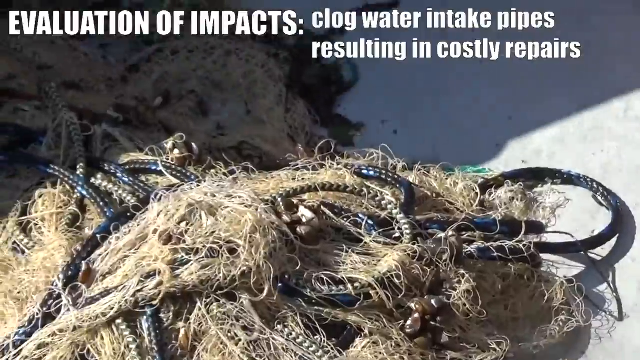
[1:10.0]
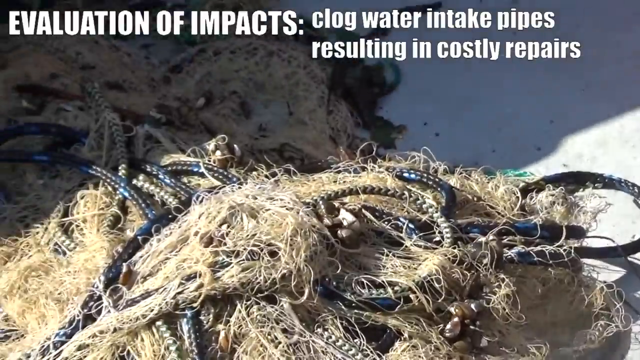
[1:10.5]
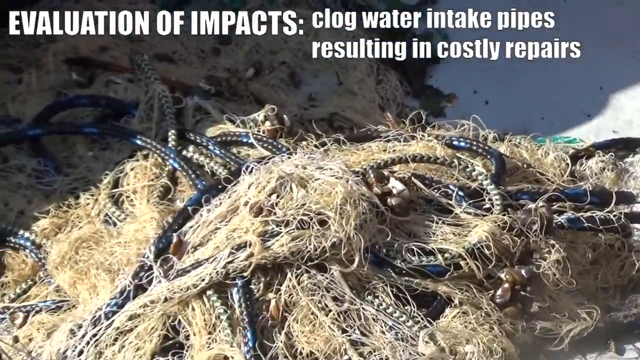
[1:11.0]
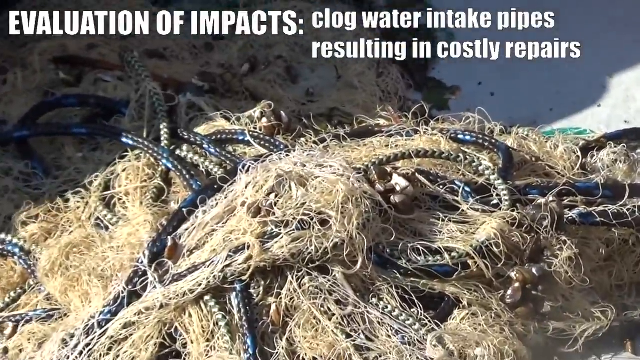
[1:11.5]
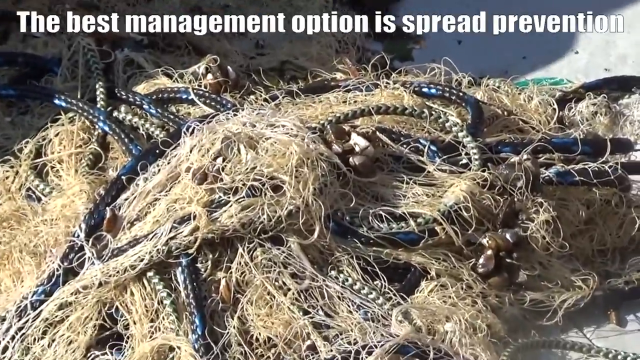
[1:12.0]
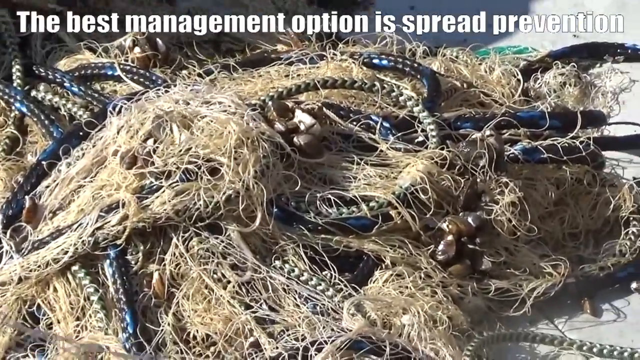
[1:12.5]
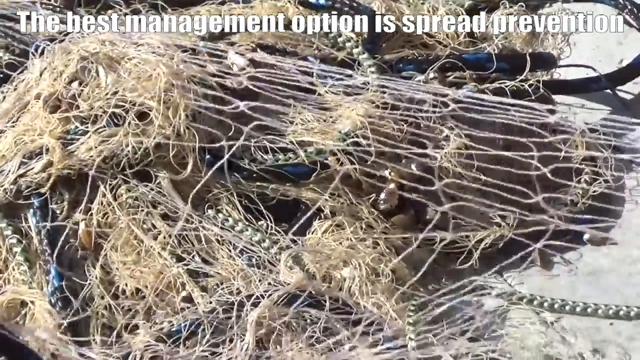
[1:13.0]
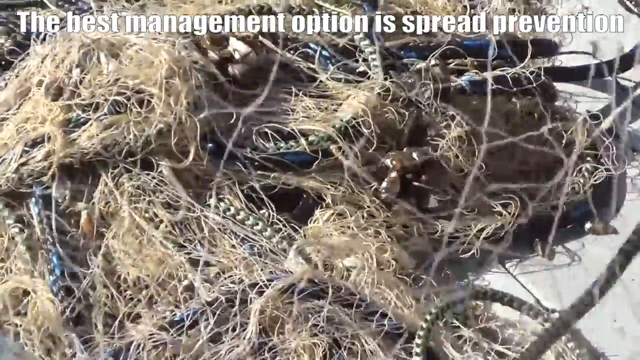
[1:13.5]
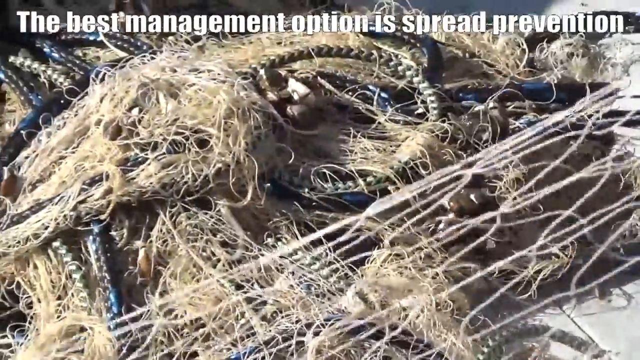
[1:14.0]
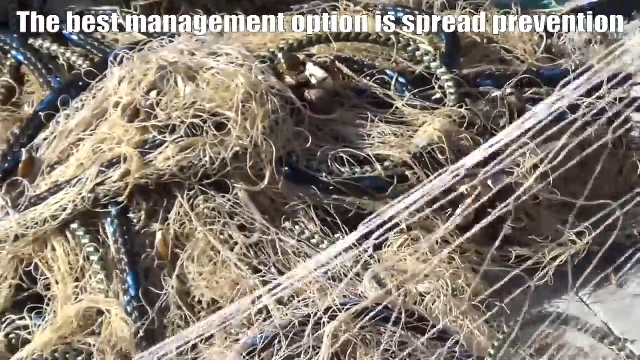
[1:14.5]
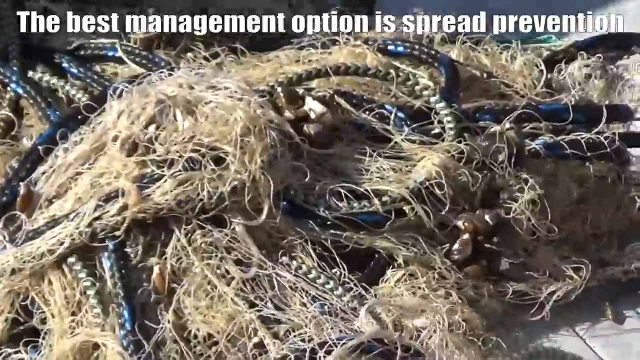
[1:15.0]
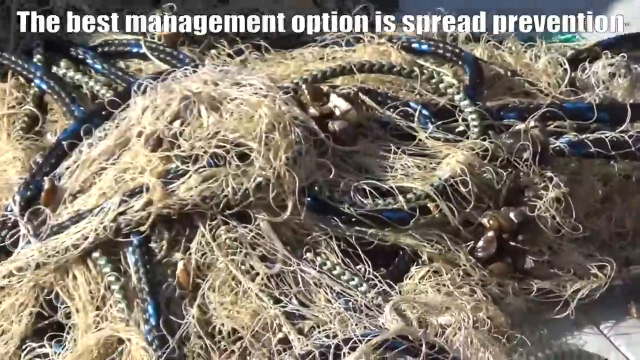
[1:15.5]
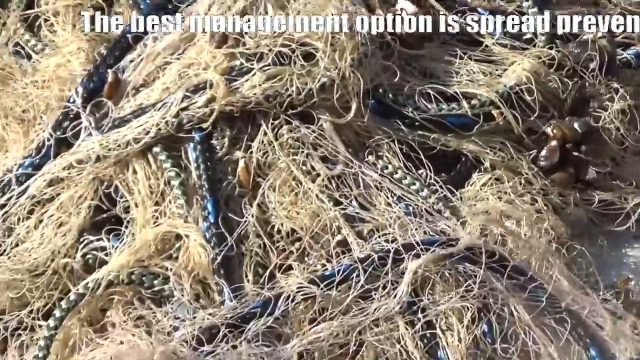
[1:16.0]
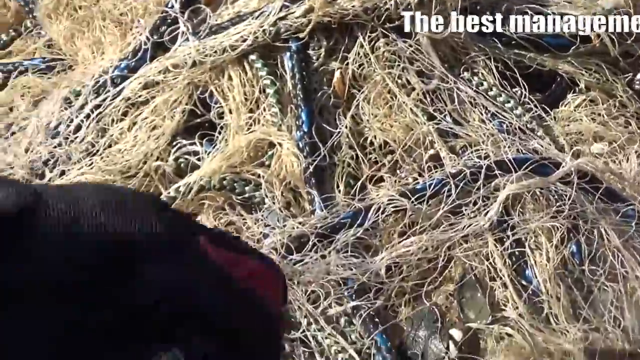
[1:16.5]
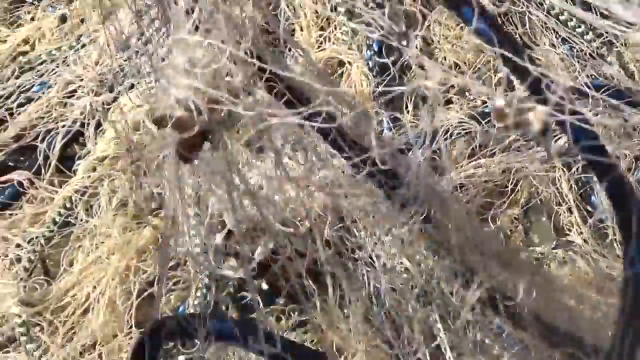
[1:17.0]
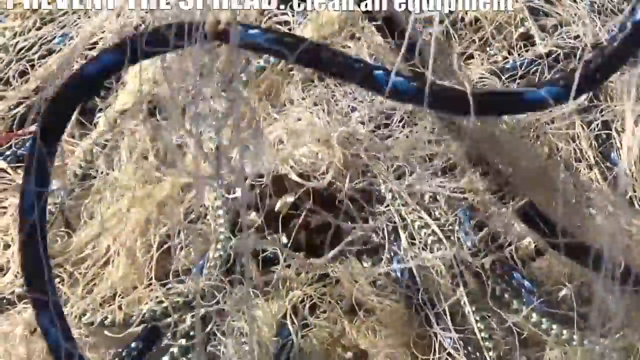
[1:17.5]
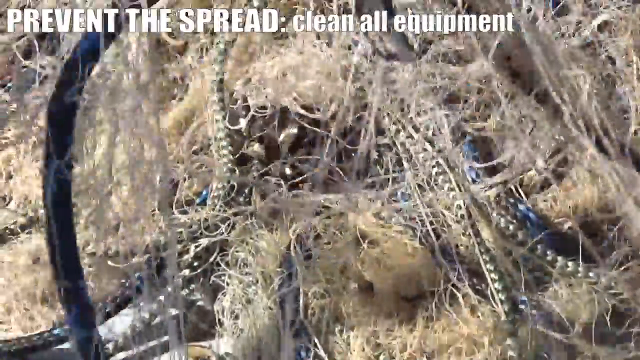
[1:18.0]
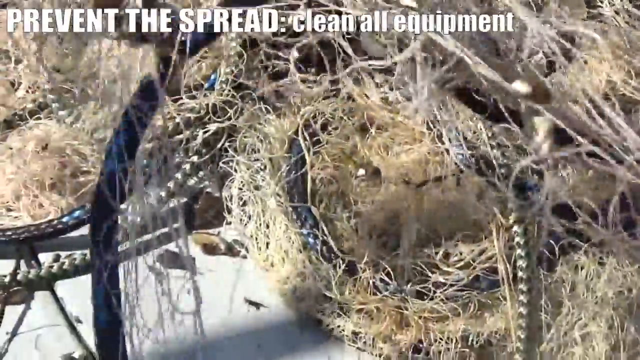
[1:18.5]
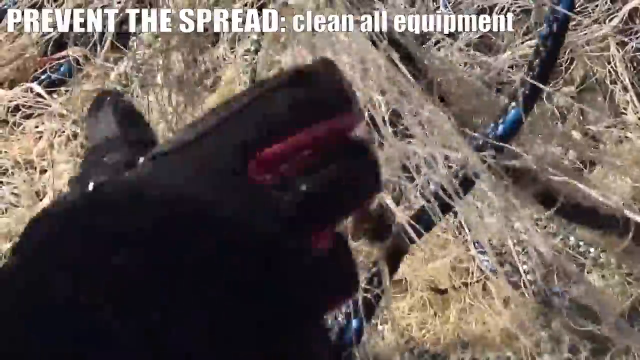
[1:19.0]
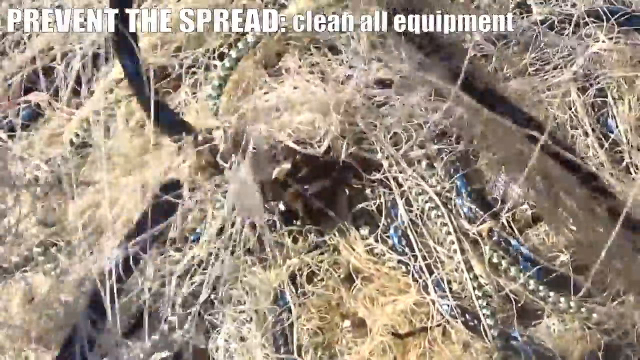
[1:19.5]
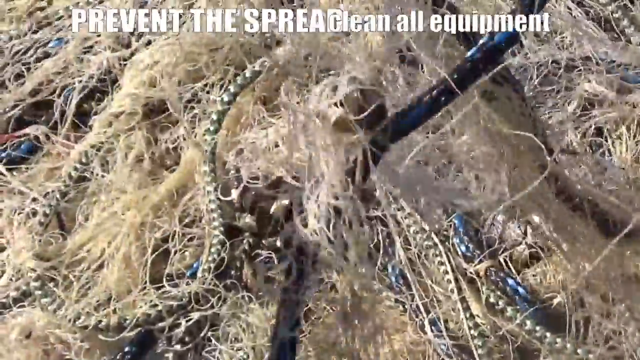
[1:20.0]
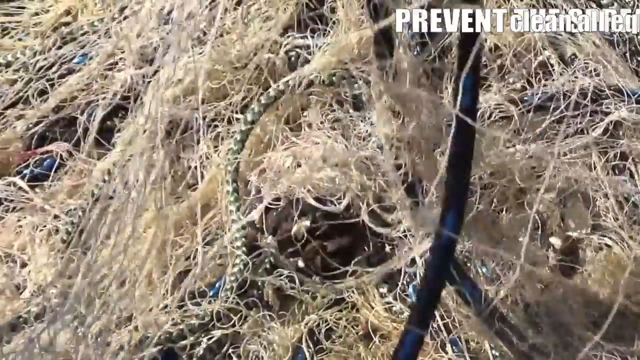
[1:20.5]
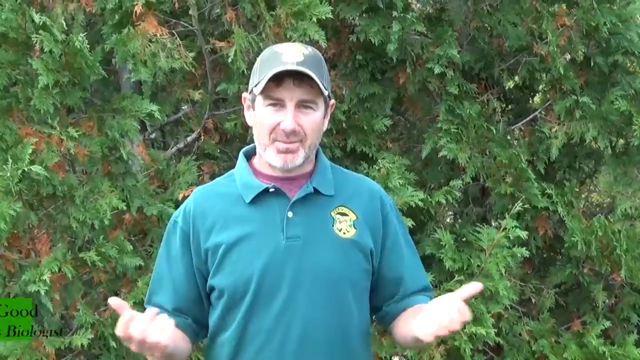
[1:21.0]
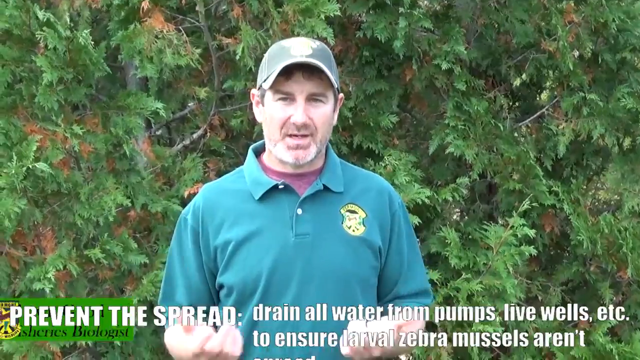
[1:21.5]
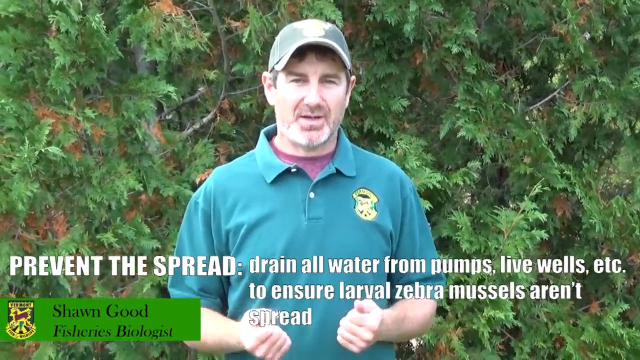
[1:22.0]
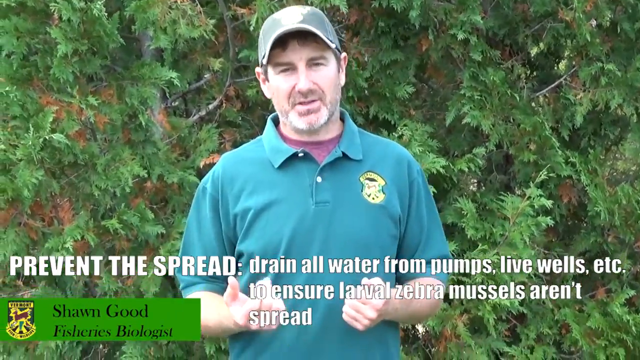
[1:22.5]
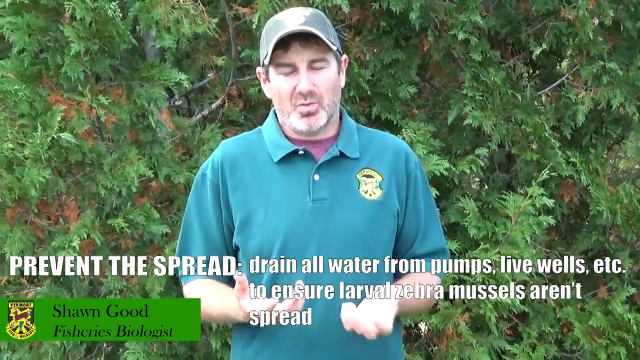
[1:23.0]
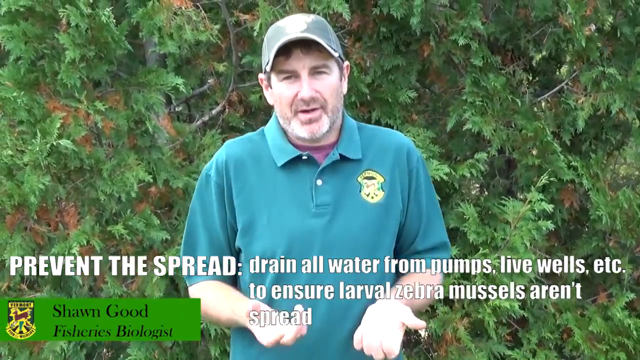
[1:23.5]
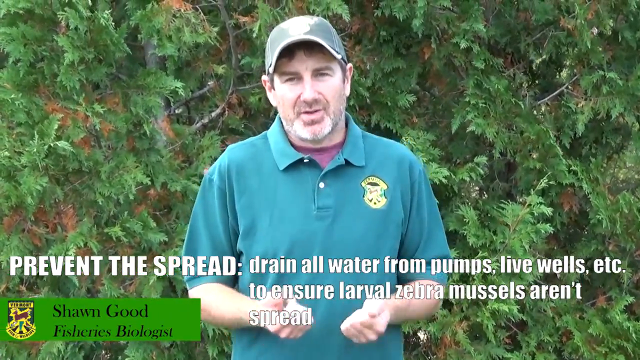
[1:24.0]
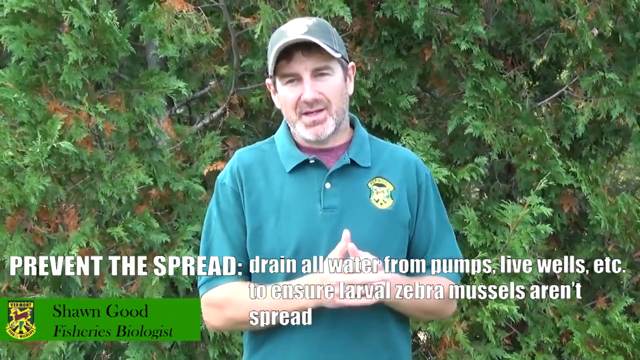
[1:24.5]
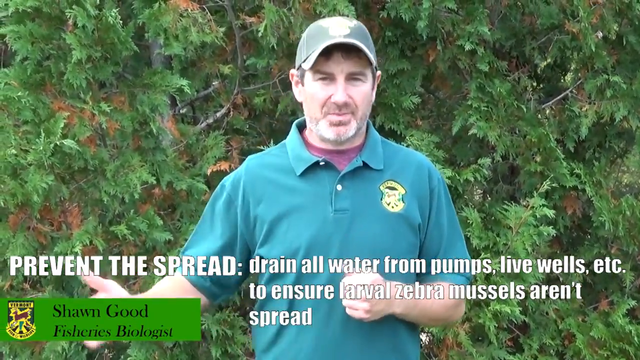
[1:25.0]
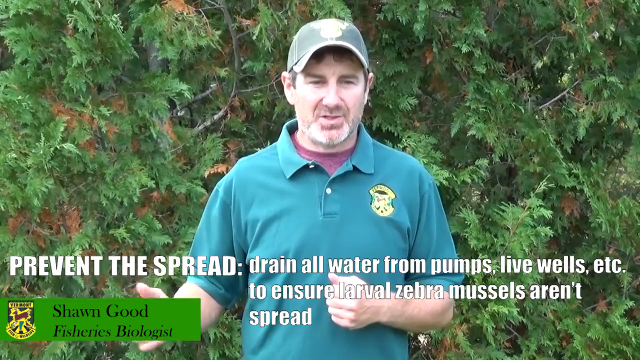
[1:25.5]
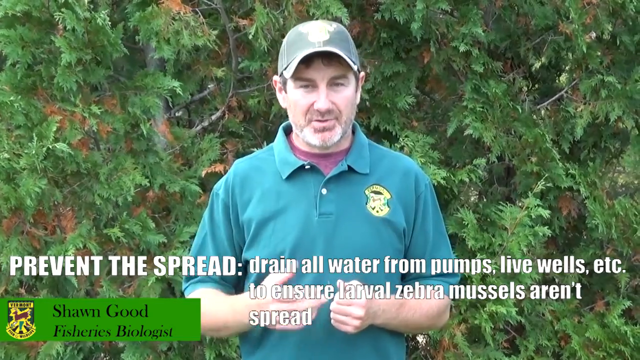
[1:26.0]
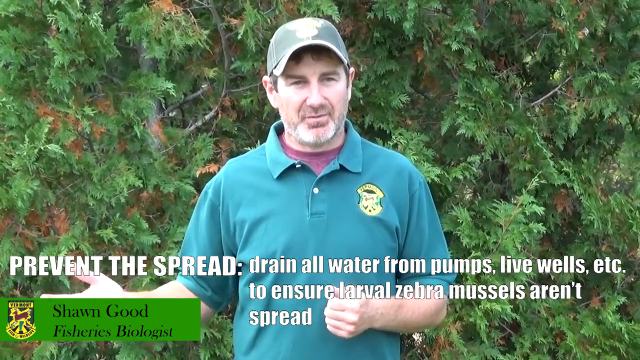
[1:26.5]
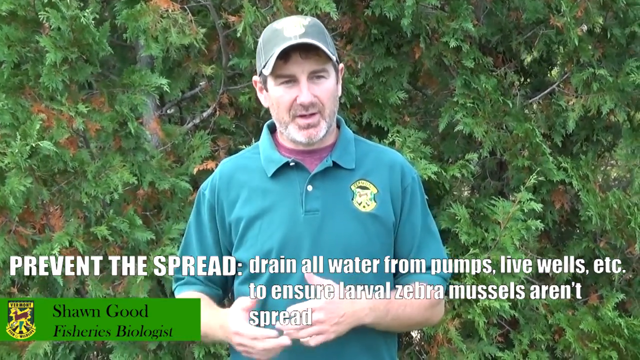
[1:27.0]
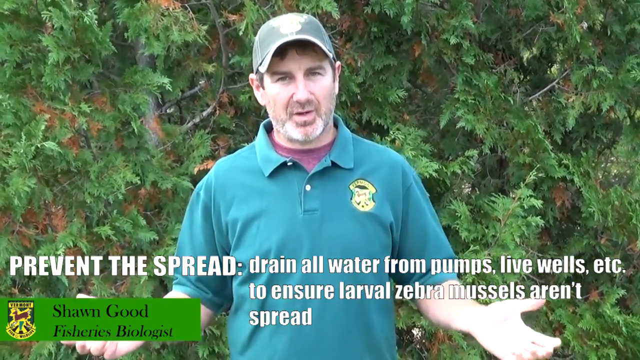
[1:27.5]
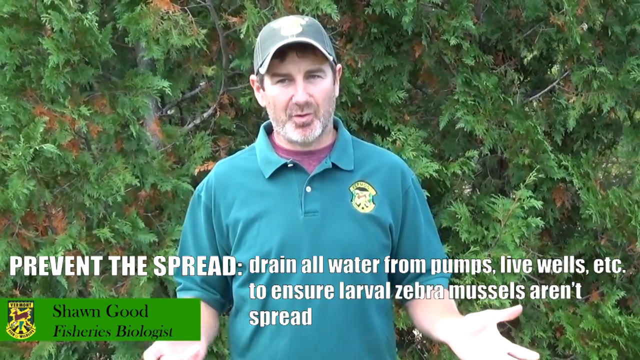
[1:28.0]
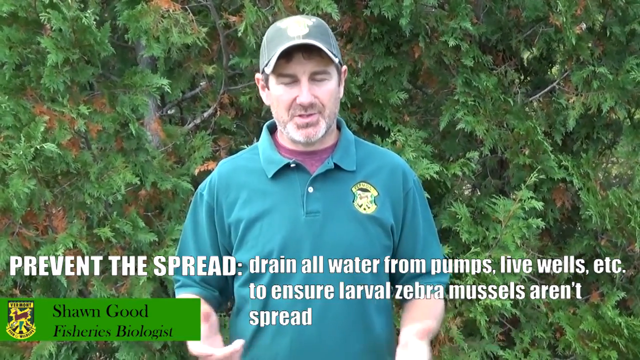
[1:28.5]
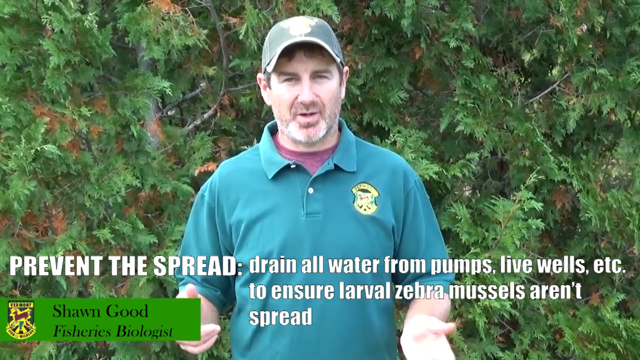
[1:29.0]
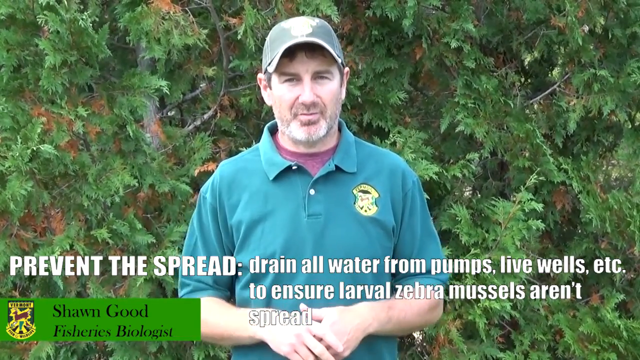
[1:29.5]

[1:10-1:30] On-screen text under "evaluation of impacts" says the mussels reduce the abundance of food and plankton in native species and that they clog water intake pipes, resulting in costly repairs. Meanwhile, what looks like fibers of ropes that have been damaged is shown. Text says the best management option is spread prevention of the zebra mussels. Sean Good, a fisheries biologist, then appears, and text beneath him reads "prevent the spread, drain all water from pumps, live wells, etc. to ensure larval zebra mussels aren't spread."